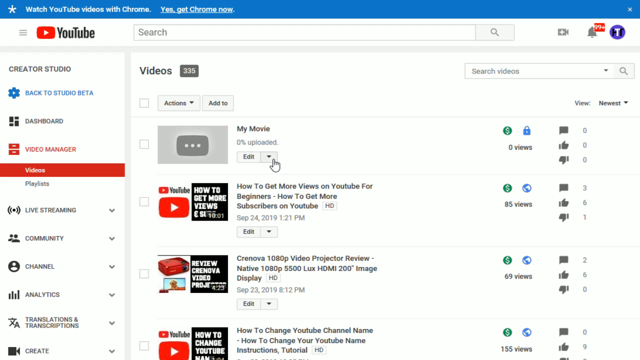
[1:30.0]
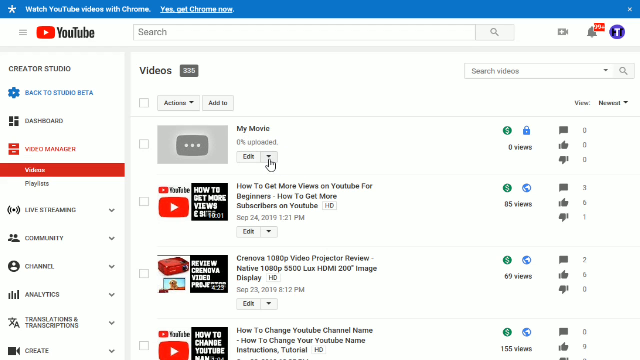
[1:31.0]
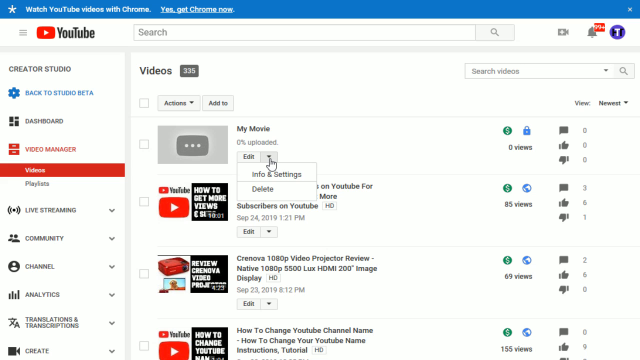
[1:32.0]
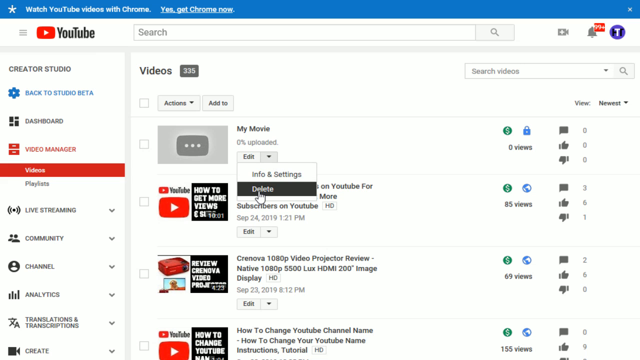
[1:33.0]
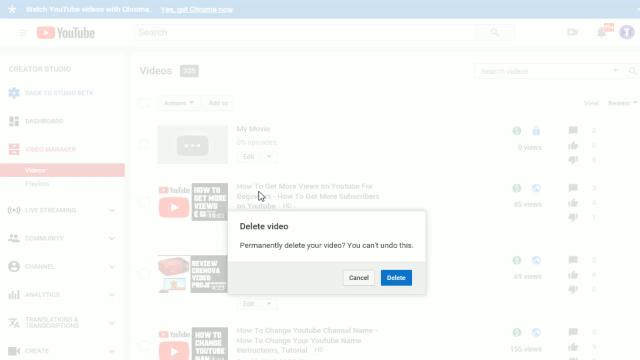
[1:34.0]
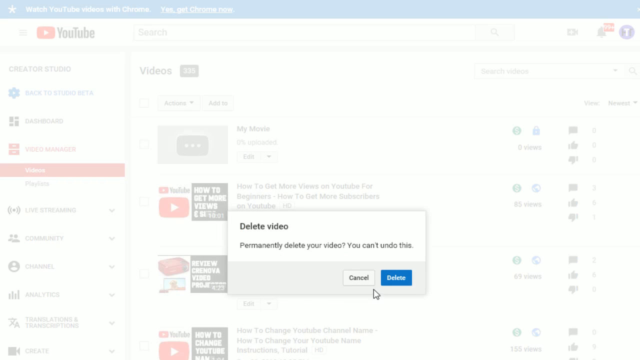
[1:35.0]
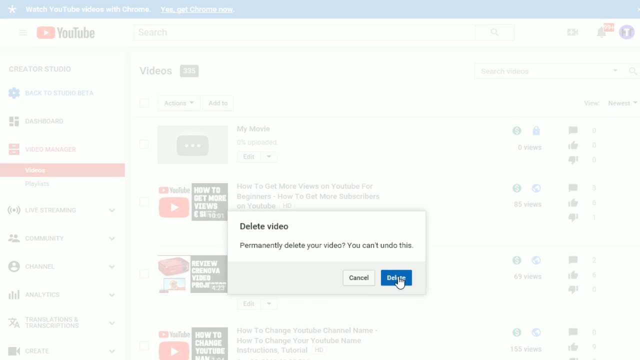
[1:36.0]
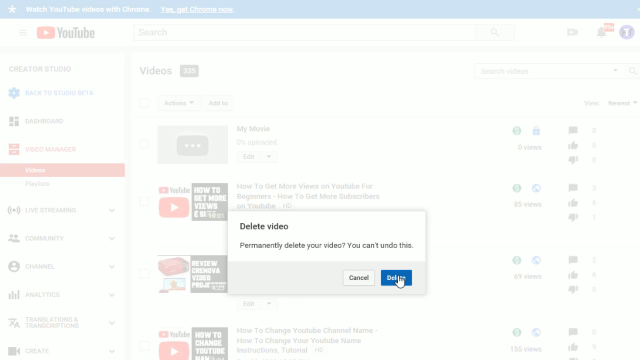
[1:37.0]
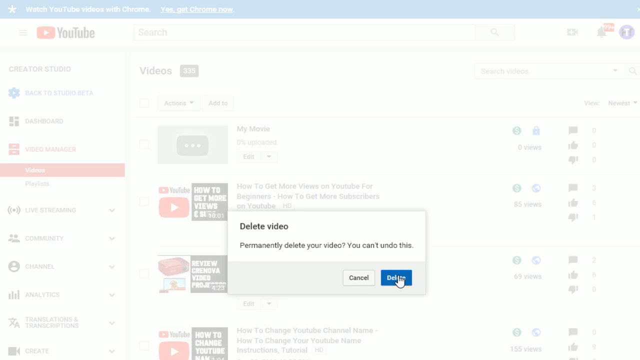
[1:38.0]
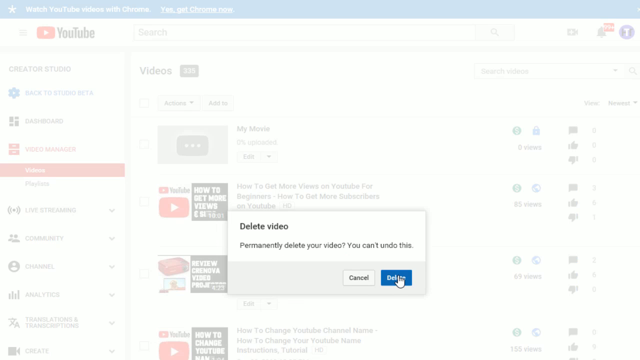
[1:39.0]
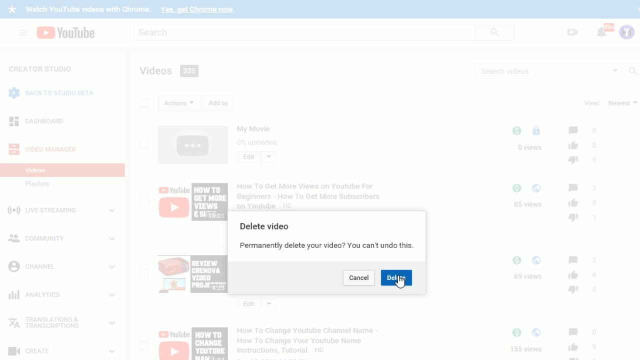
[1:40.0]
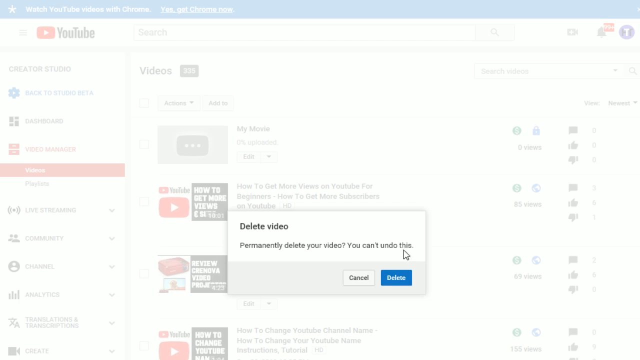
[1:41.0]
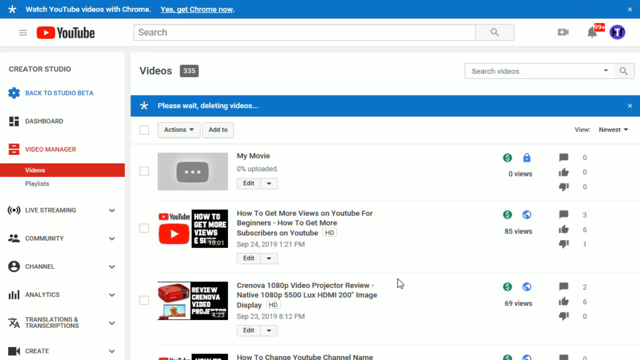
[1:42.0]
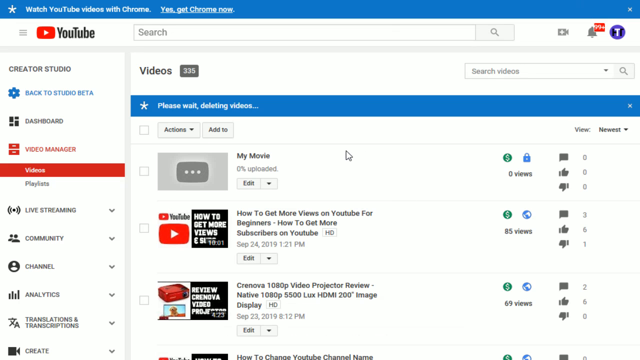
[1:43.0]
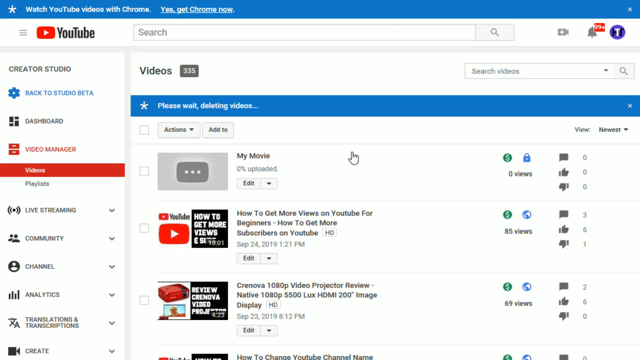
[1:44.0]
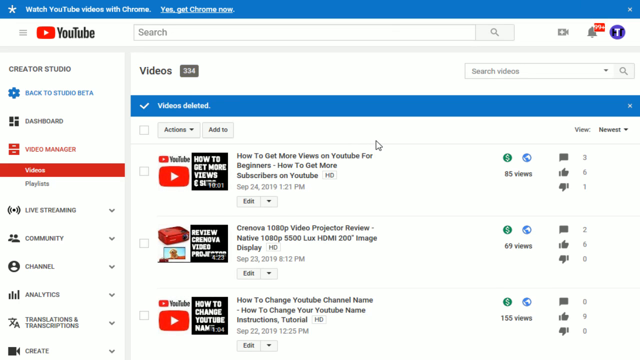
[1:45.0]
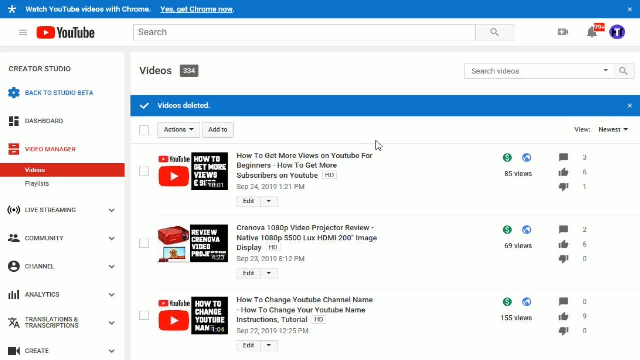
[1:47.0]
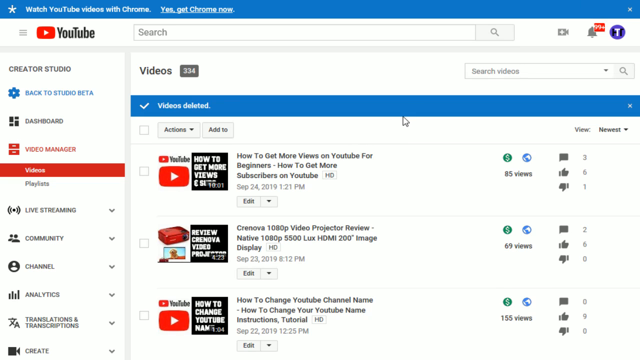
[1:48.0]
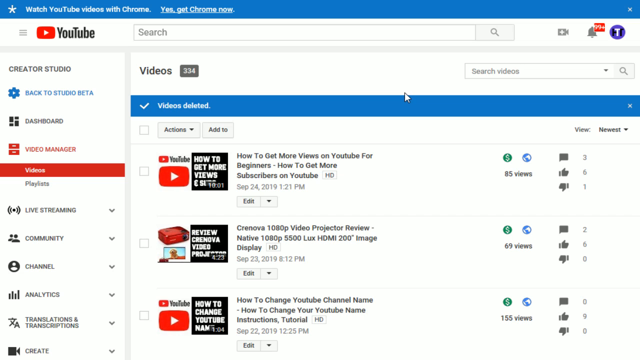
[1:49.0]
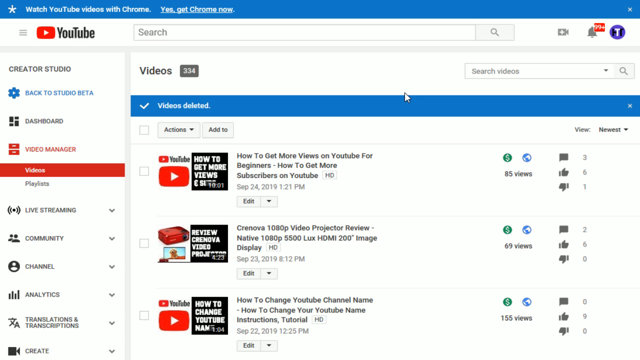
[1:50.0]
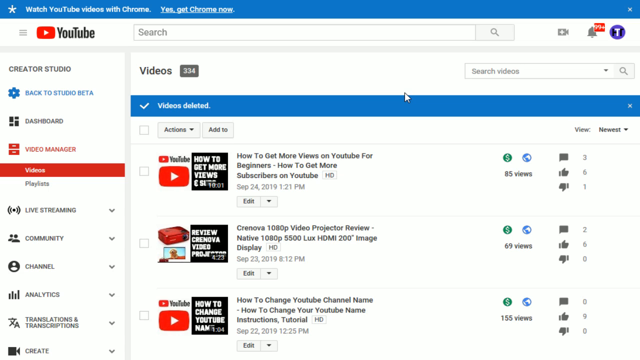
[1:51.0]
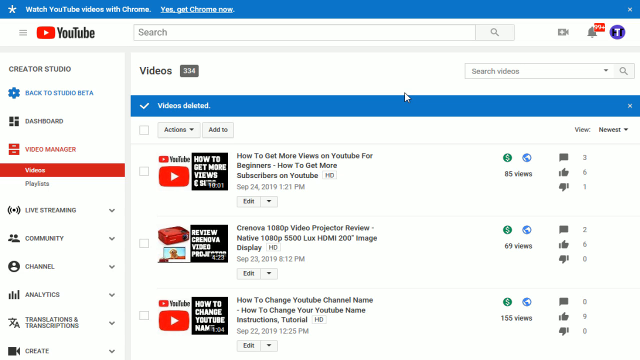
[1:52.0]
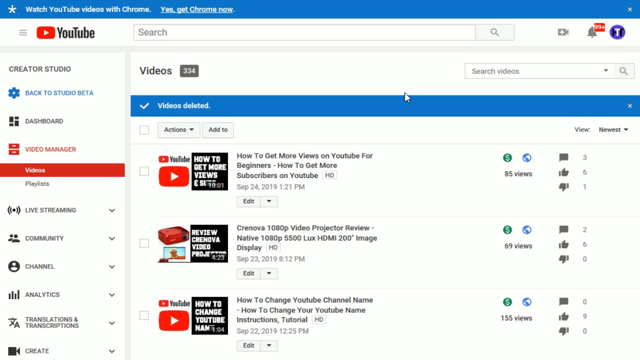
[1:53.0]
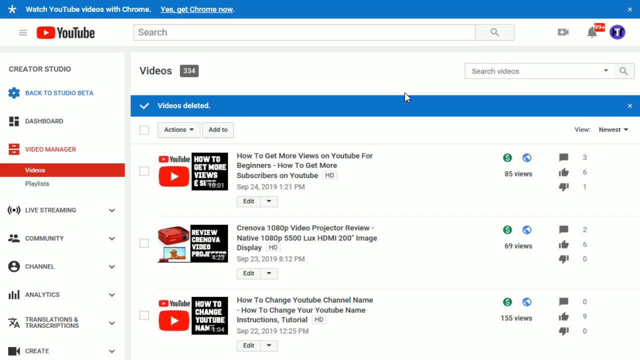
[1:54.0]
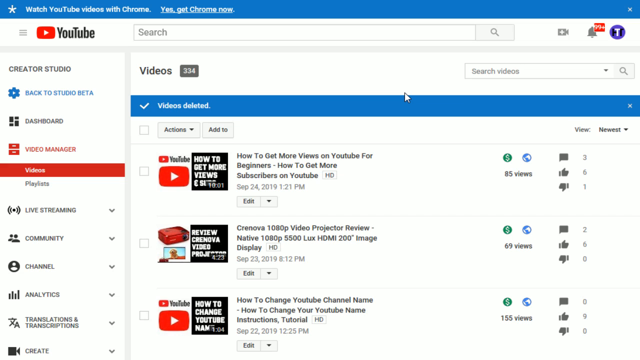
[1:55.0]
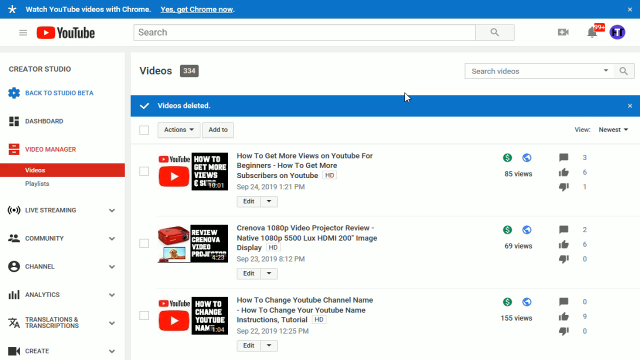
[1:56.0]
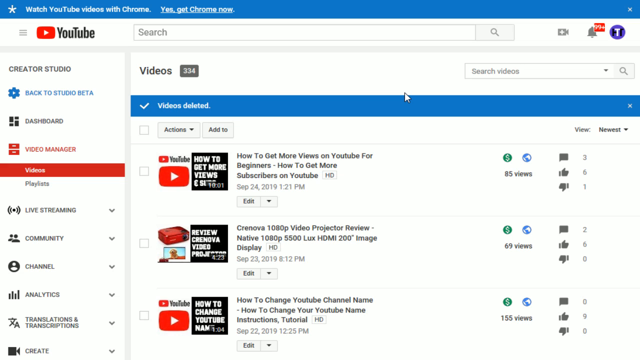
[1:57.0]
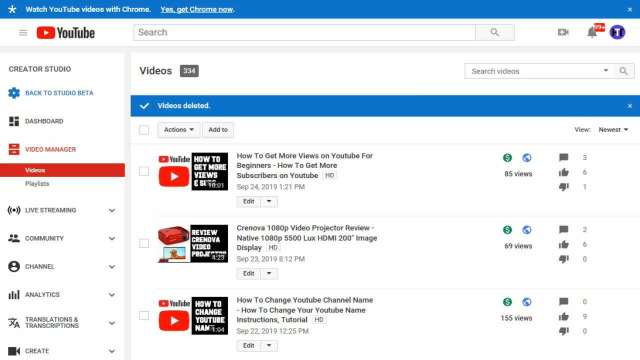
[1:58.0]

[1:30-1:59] The Videos Manager shows the video from before, with a drop-down arrow next to it and a delete option as well, offering two different ways to delete the video. The video is deleted through this screen, and the text "videos deleted" appears with a checkmark next to it. The cursor then hovers around the YouTube Studio dashboard for a bit. No physical subjects are visible; the setting is the video manager videos page.